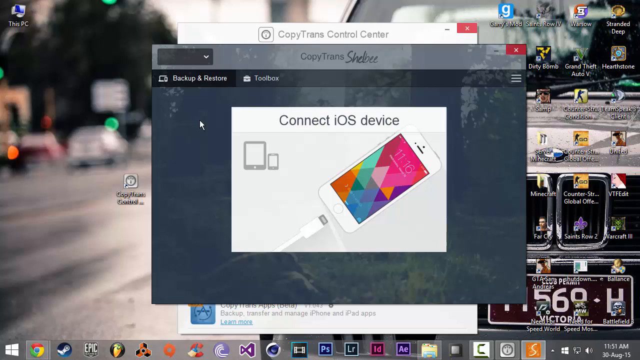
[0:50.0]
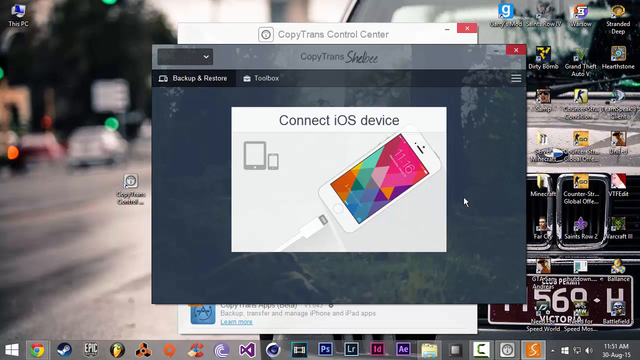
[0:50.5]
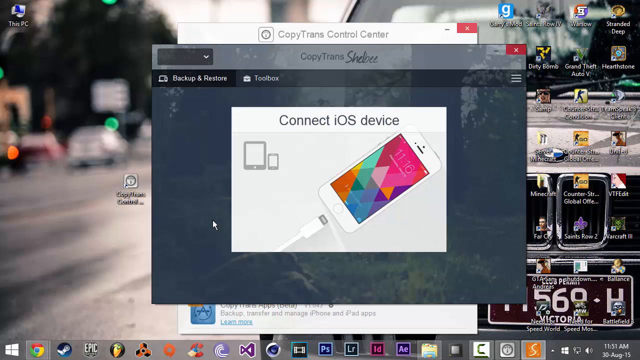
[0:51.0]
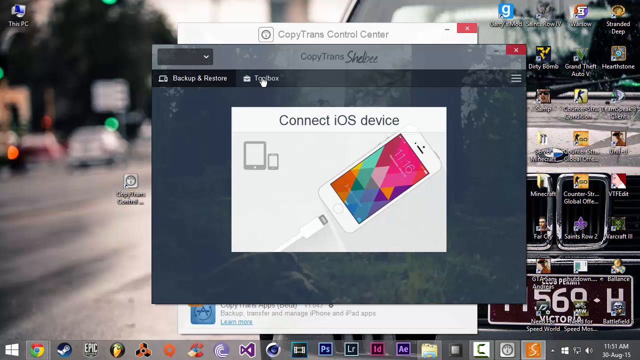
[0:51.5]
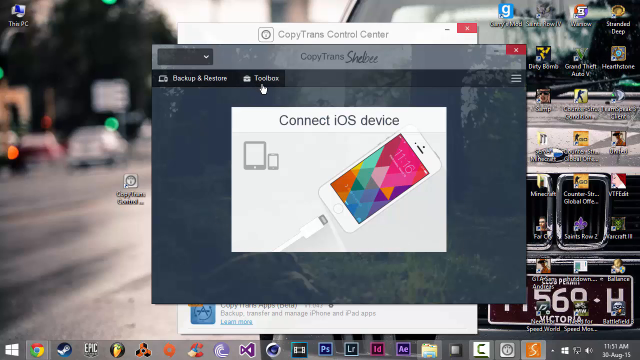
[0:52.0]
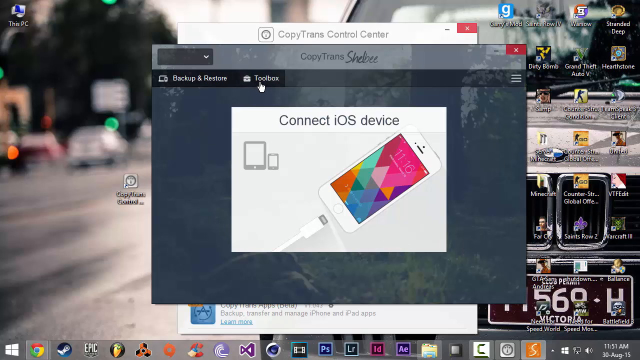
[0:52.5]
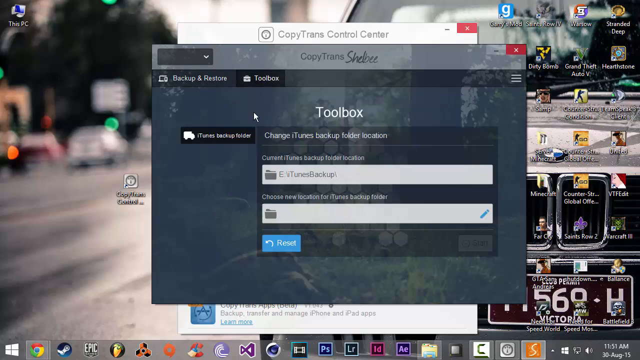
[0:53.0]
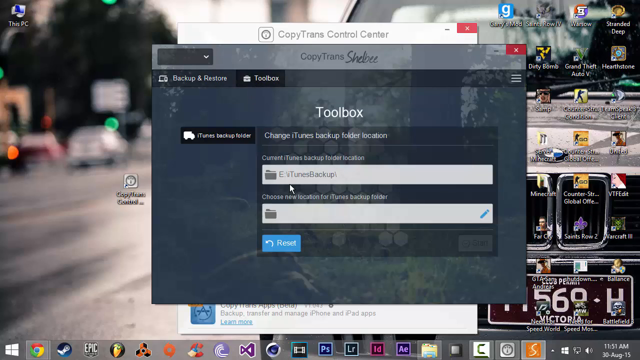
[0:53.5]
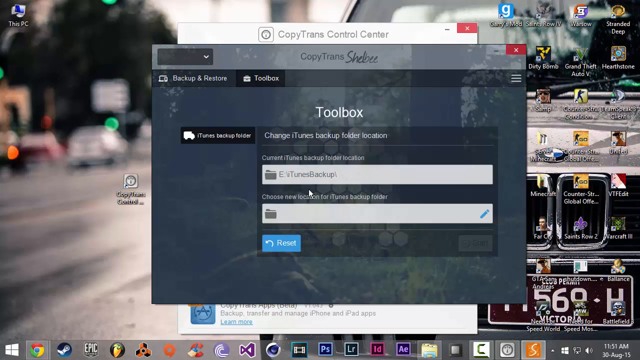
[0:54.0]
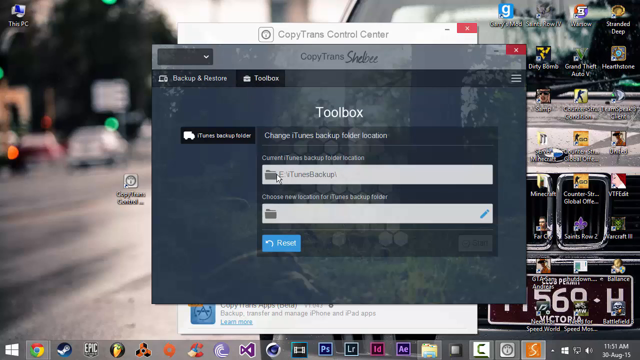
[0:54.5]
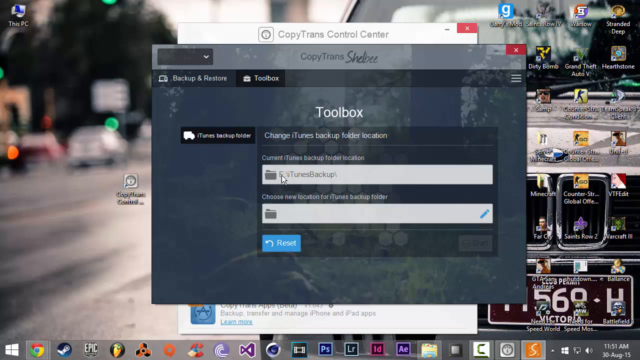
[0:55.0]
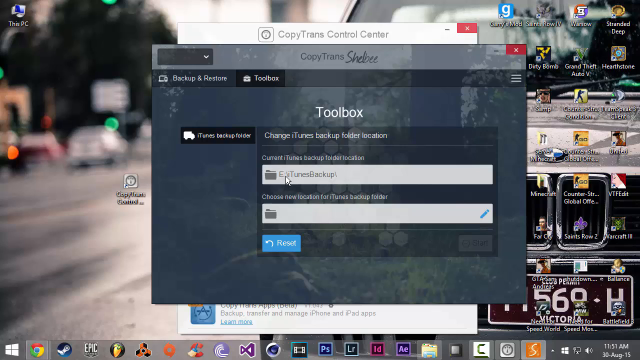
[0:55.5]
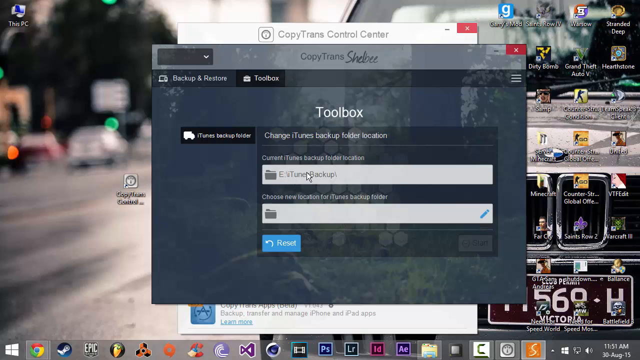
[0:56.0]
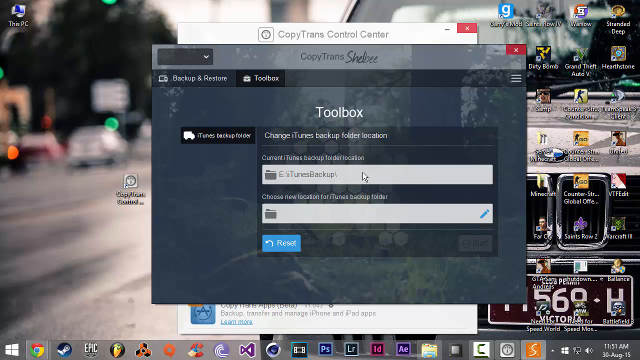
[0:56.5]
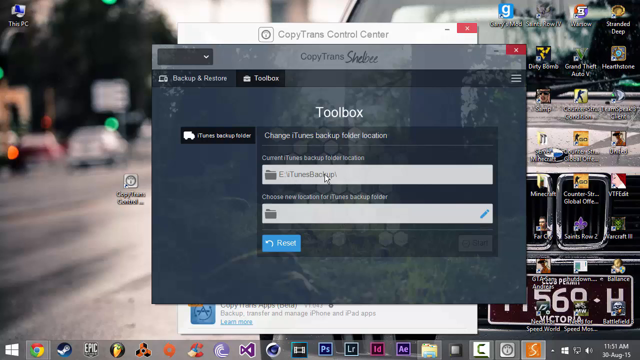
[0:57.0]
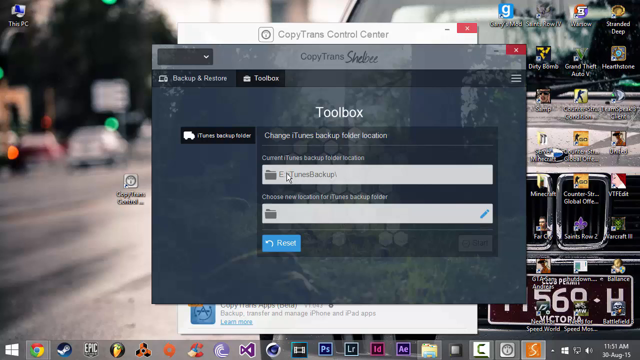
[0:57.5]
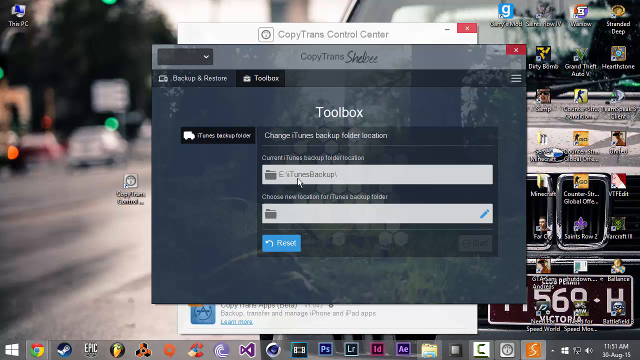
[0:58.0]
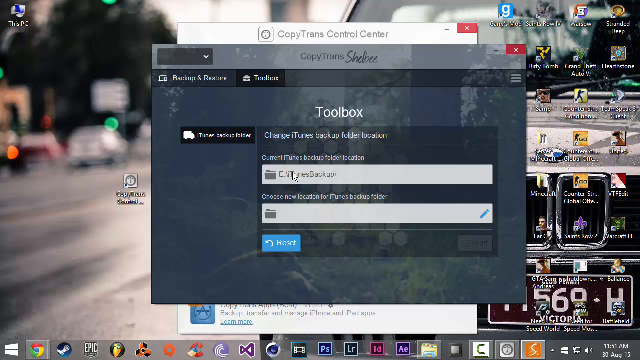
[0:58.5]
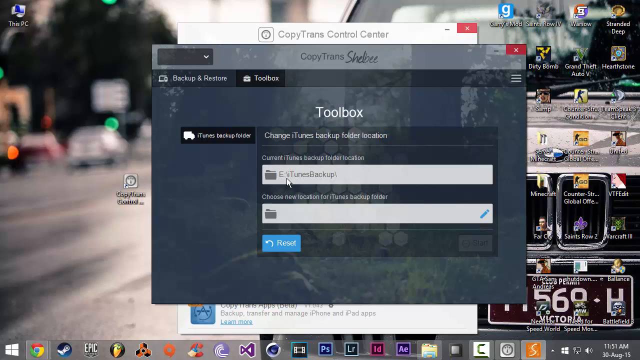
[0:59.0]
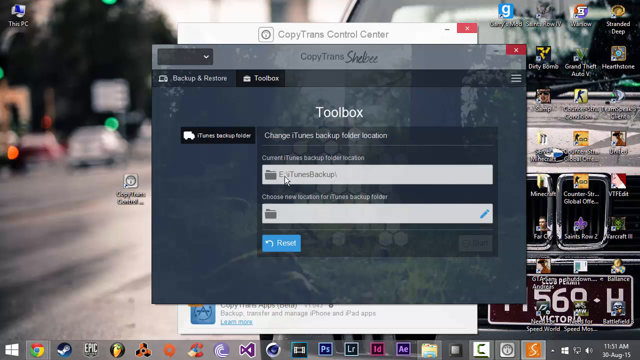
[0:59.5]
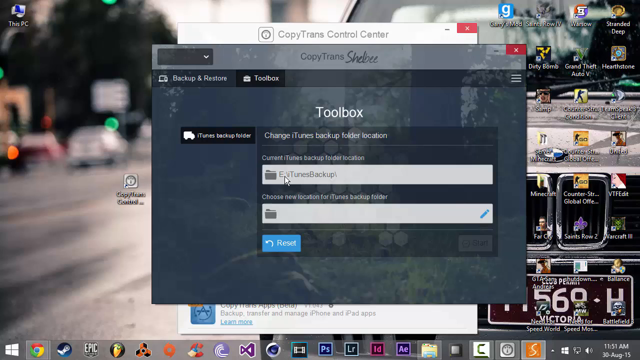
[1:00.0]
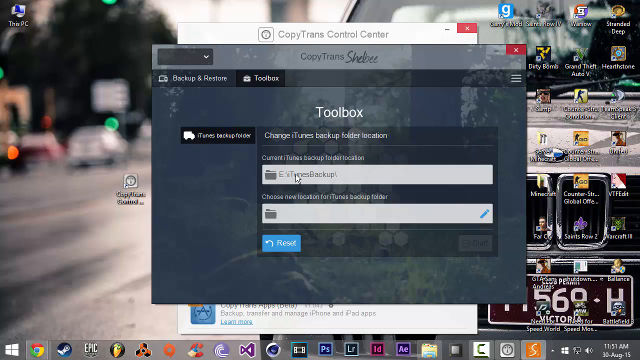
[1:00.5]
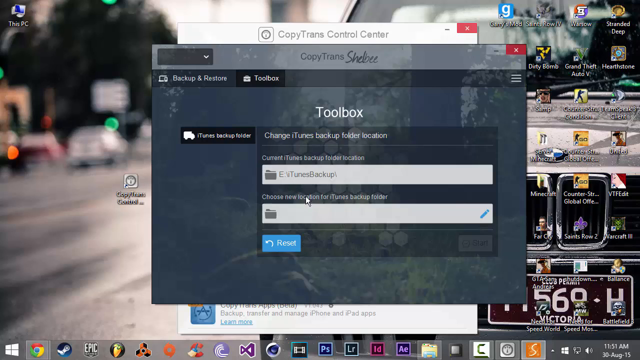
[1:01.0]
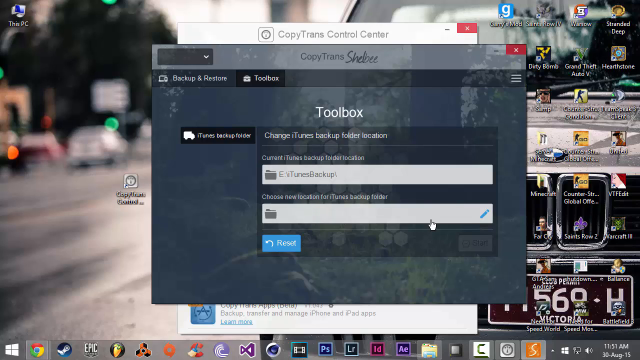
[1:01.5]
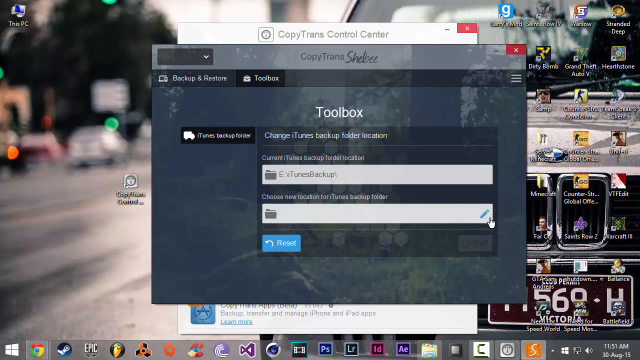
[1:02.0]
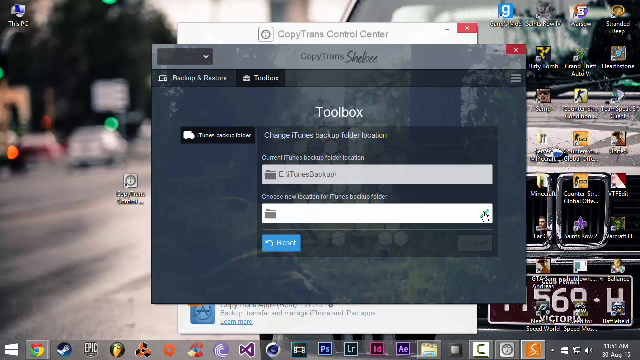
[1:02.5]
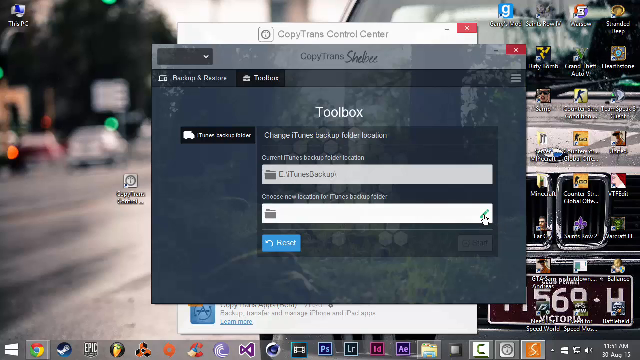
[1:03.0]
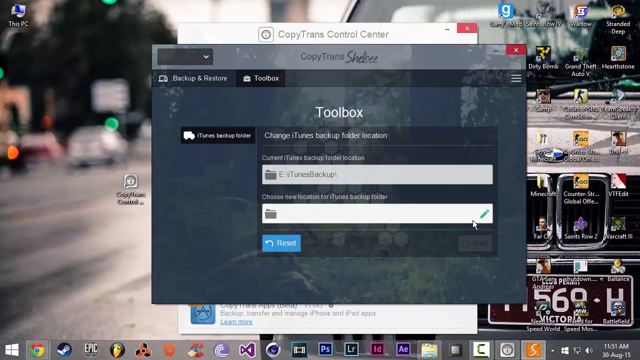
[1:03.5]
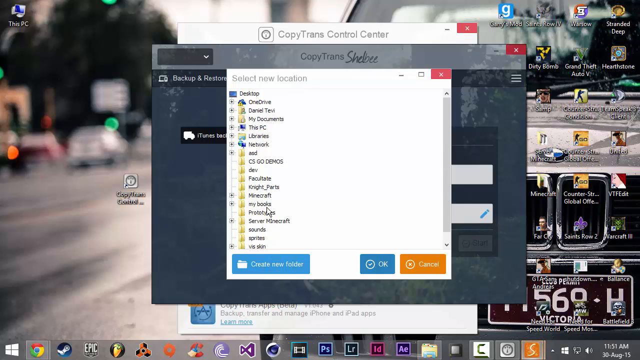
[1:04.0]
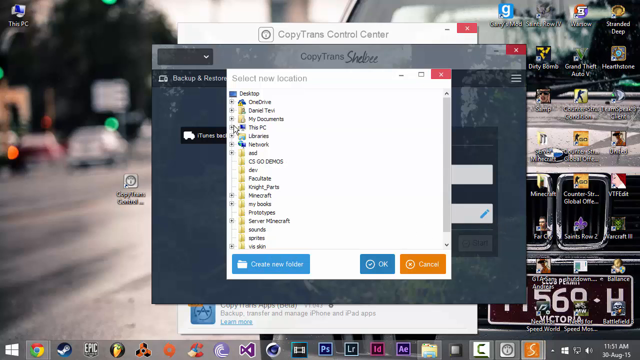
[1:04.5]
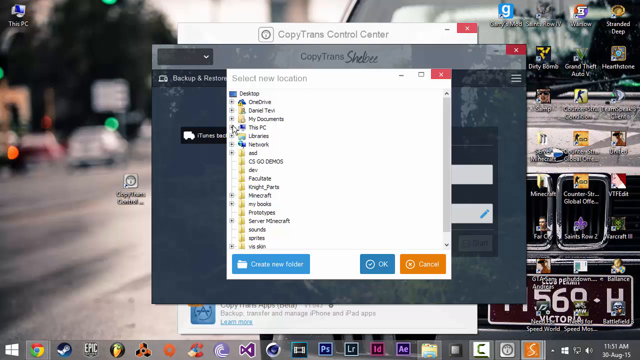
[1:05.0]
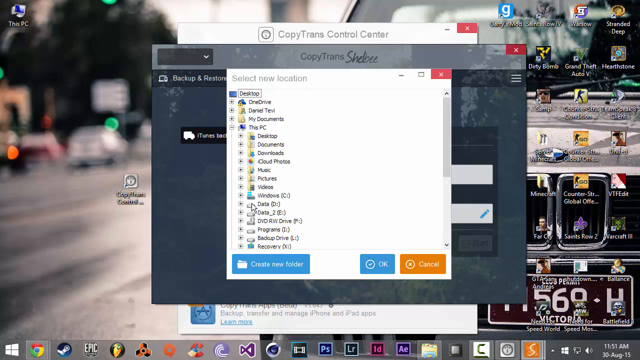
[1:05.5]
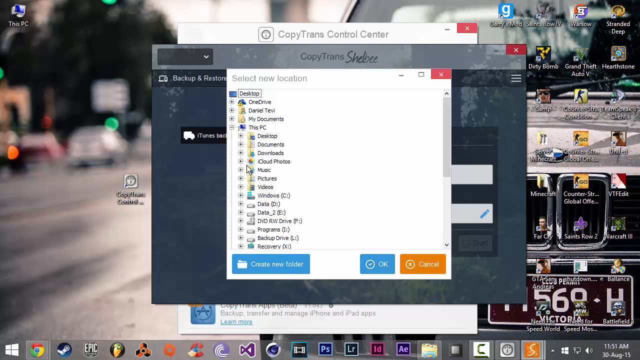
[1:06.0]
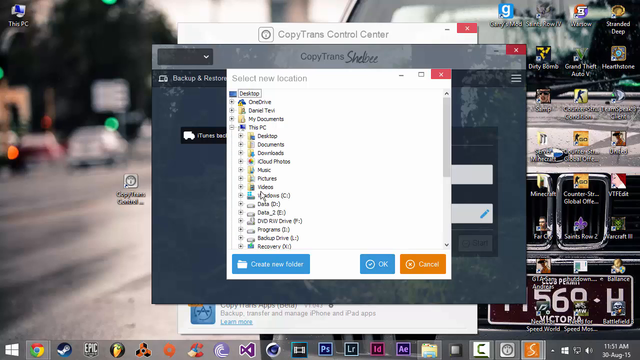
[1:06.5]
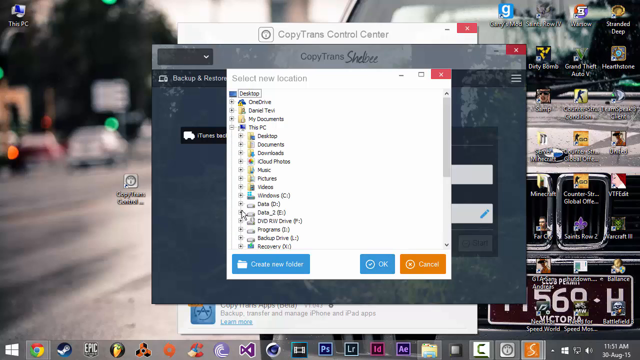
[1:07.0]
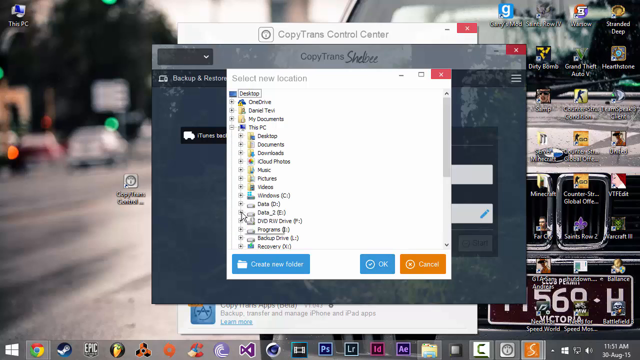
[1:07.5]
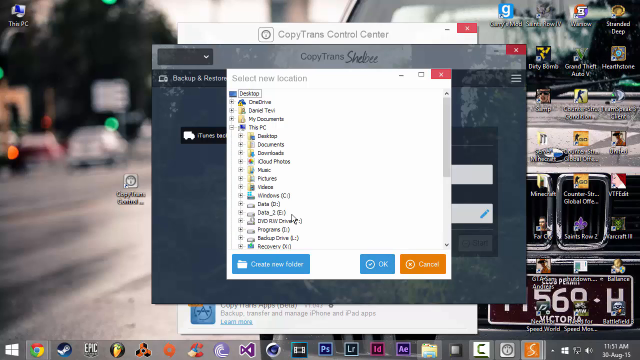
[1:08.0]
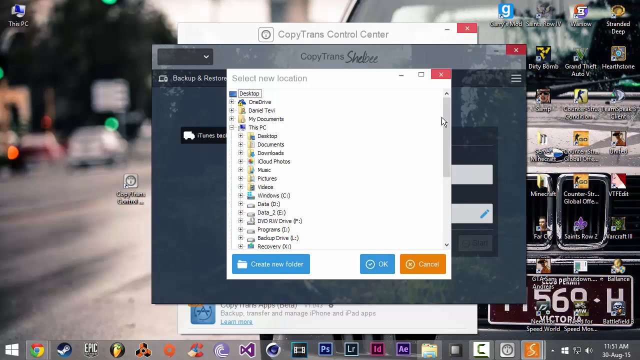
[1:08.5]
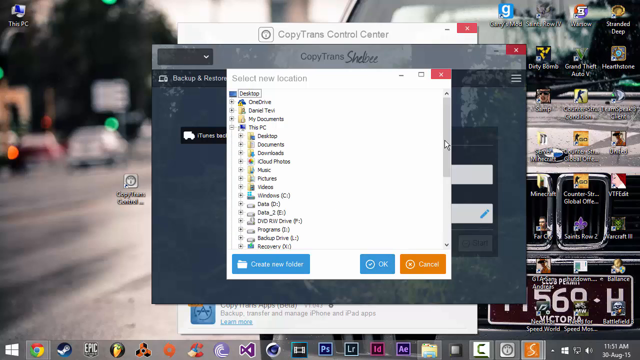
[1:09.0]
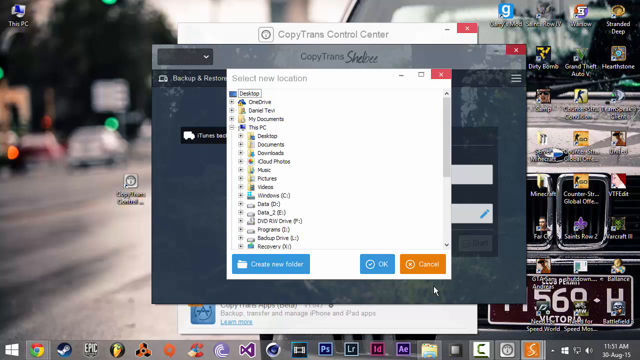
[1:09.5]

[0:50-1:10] A window that has popped up on a computer screen says "connect ios device" in black text, with a picture of a cell phone and a wire that looks like a charger about to be connected to it. The cursor hovers over a tab that says "toolbox" in white text and clicks it, and a window pops up that says "toolbox" with two input fields, which the user hovers over with the cursor. Underneath the input fields is a blue button with white text that says "reset". The user seems to go to the second input field and clicks an edit icon, and a window appears with several options and a lot of yellow icons on the side. They click one of the options, and it opens another set of options.